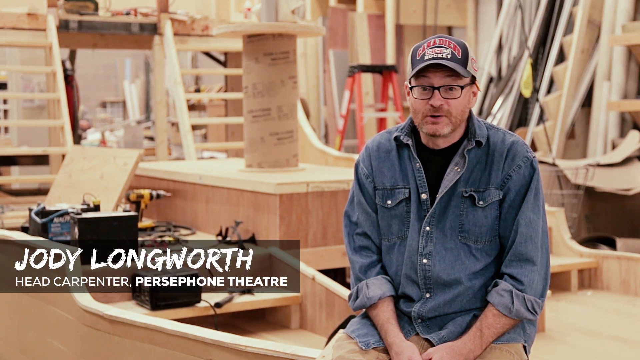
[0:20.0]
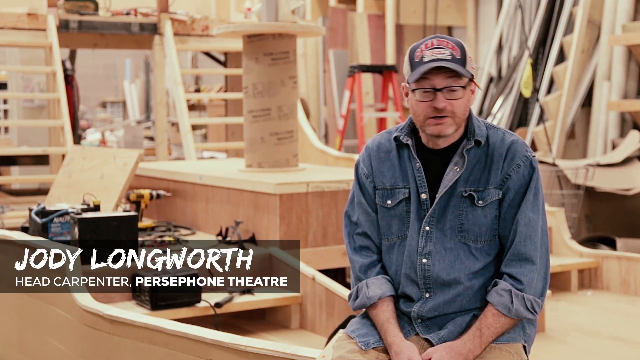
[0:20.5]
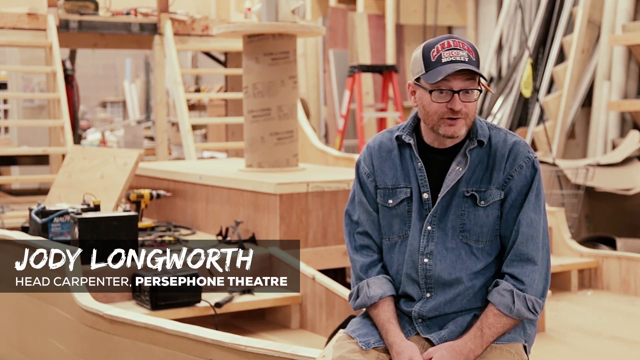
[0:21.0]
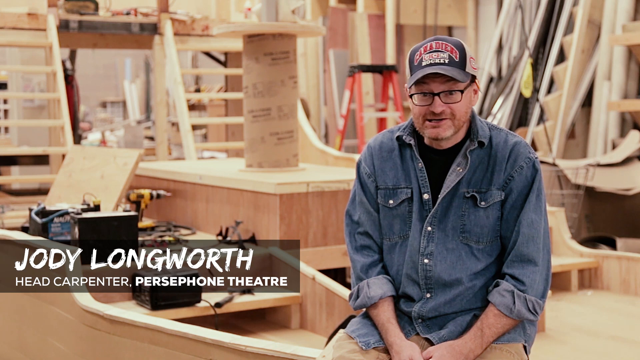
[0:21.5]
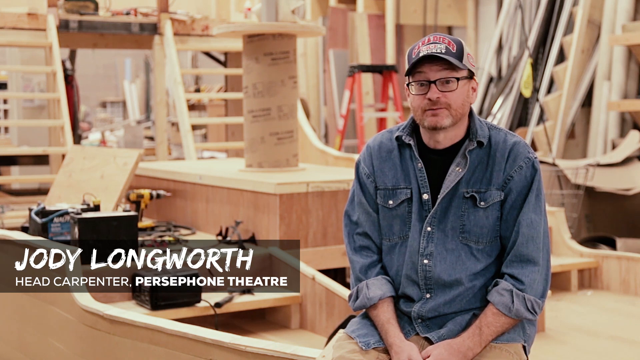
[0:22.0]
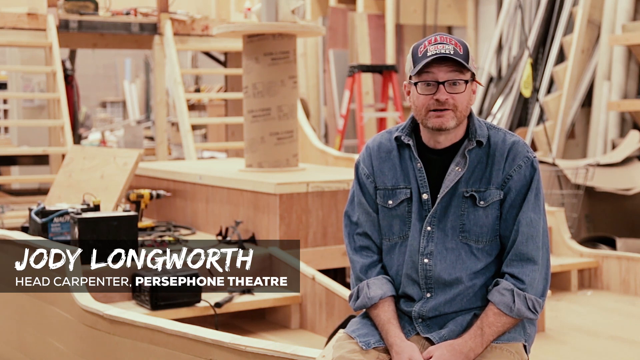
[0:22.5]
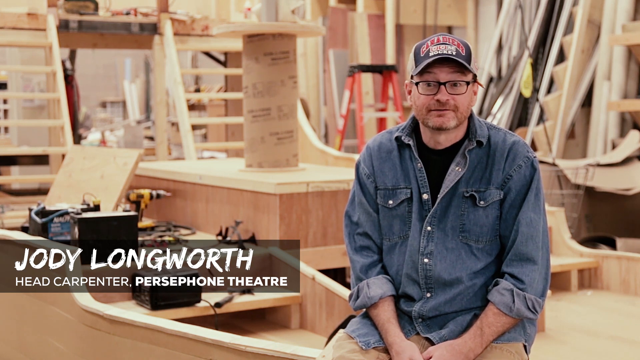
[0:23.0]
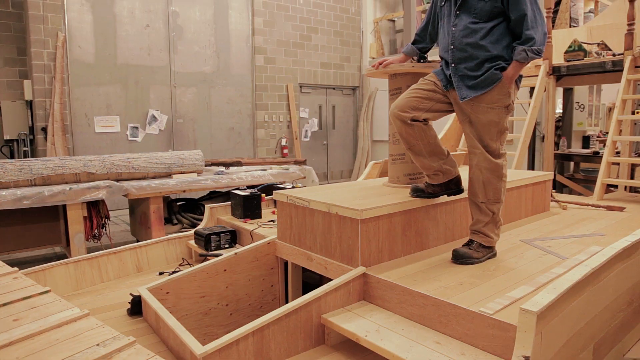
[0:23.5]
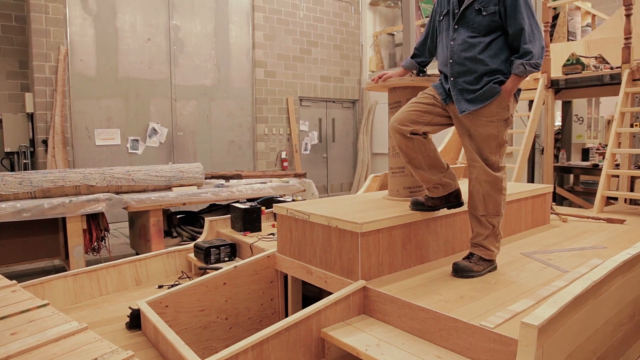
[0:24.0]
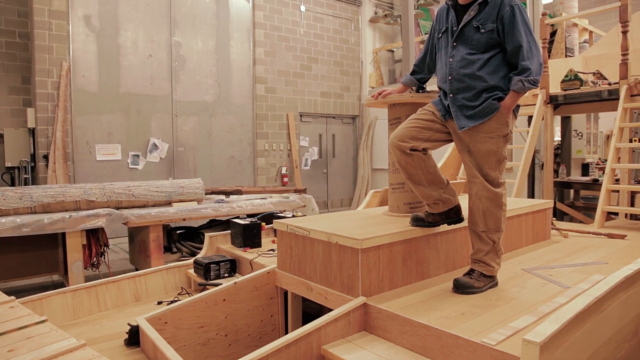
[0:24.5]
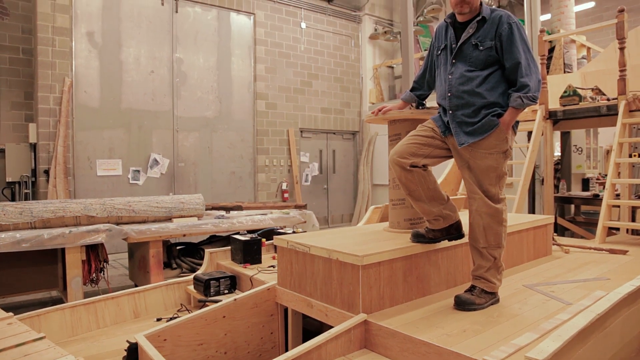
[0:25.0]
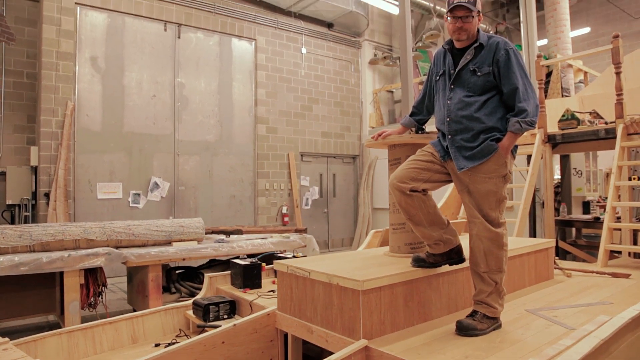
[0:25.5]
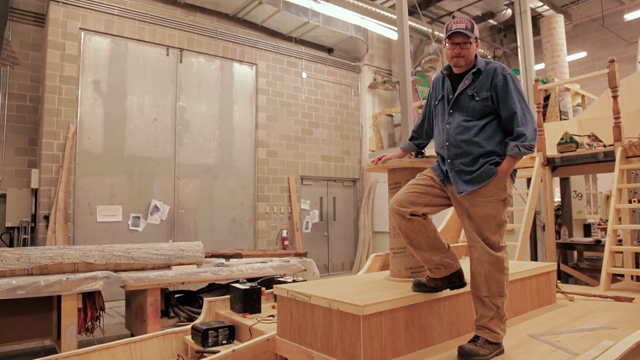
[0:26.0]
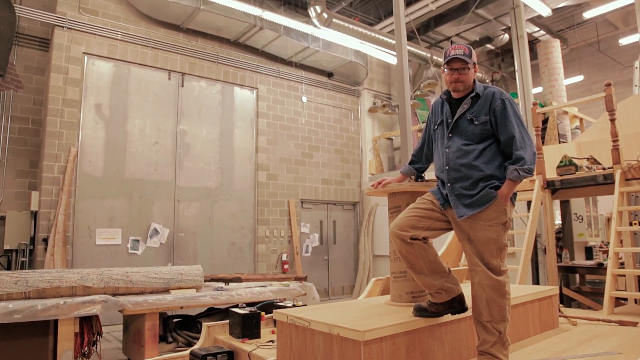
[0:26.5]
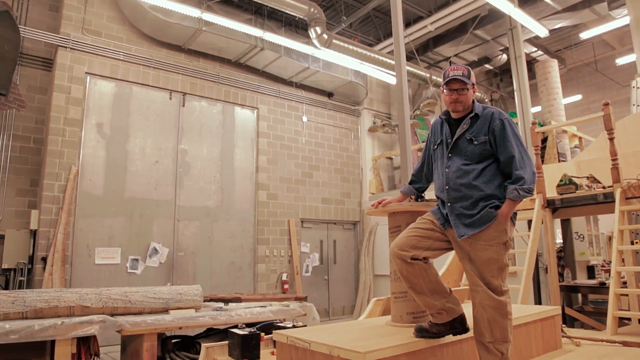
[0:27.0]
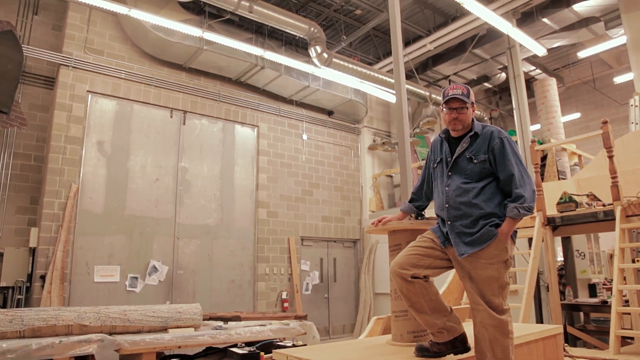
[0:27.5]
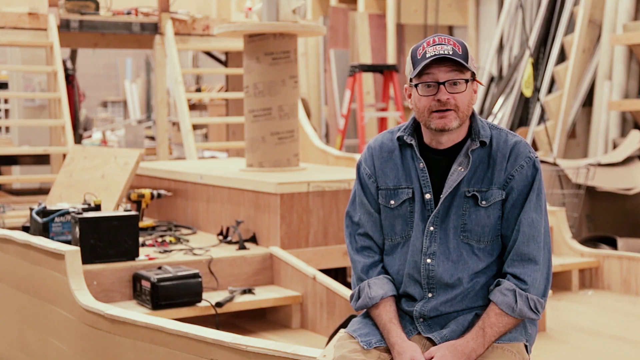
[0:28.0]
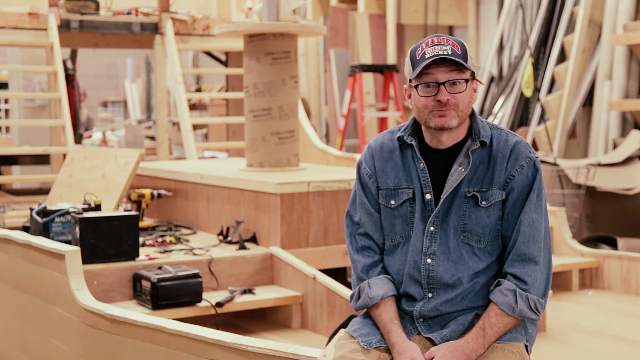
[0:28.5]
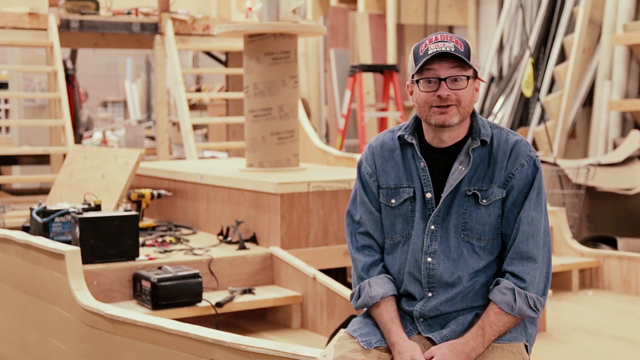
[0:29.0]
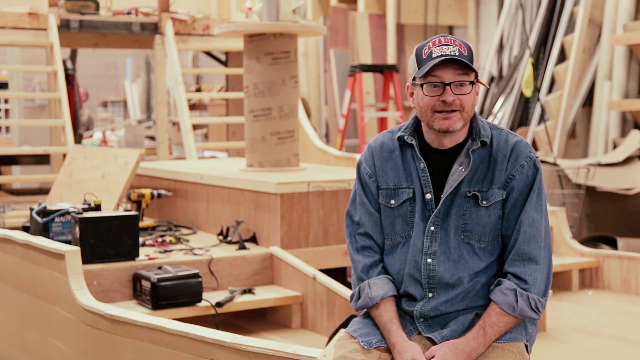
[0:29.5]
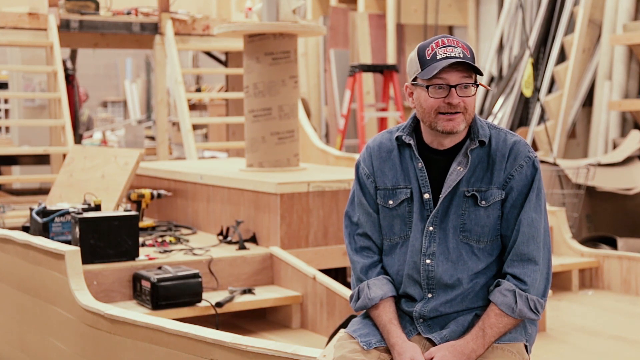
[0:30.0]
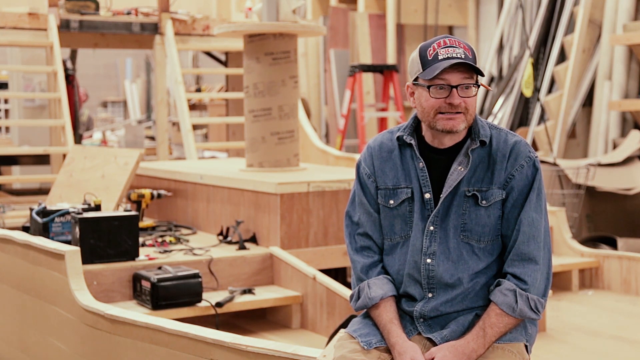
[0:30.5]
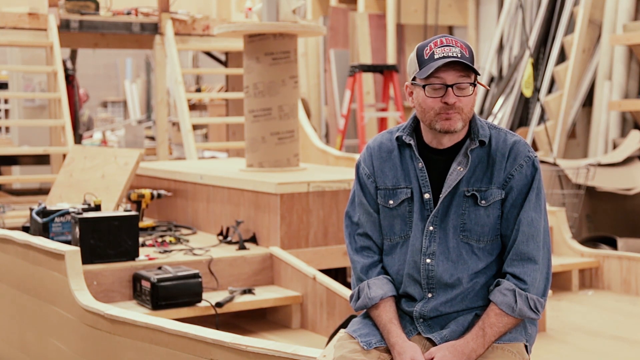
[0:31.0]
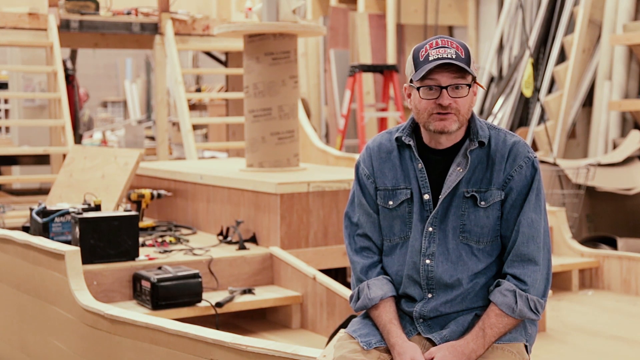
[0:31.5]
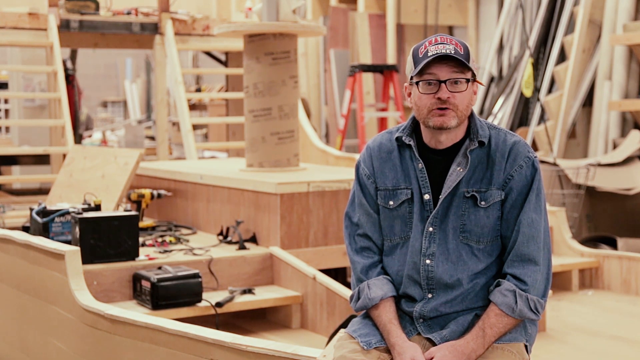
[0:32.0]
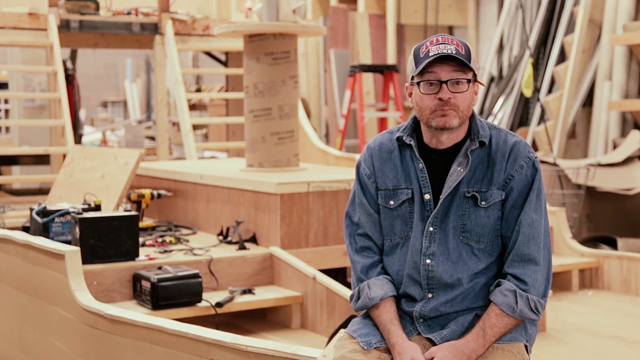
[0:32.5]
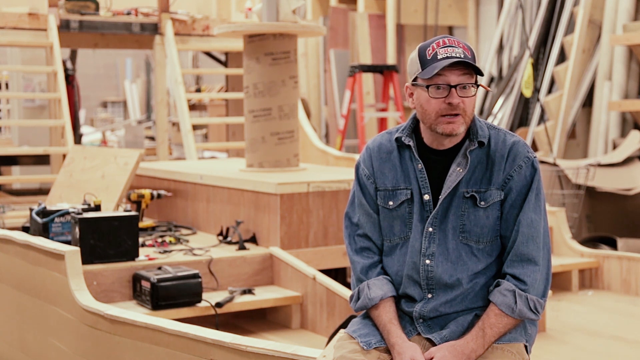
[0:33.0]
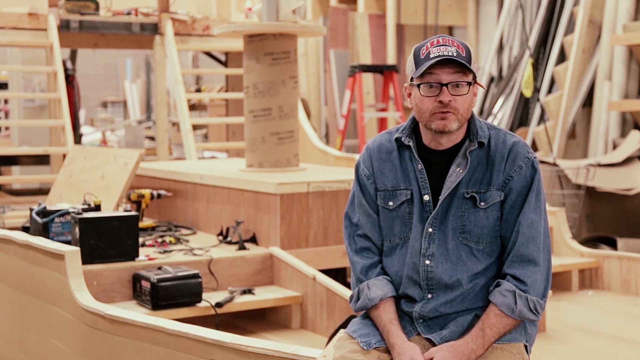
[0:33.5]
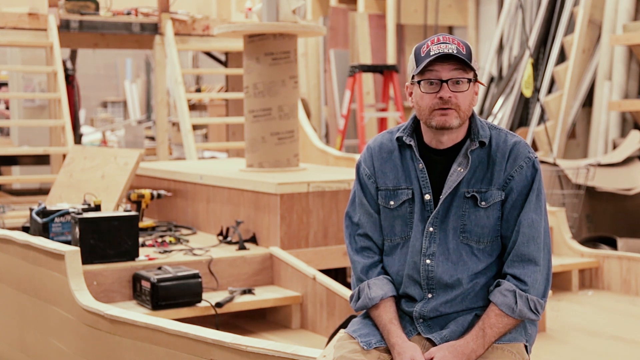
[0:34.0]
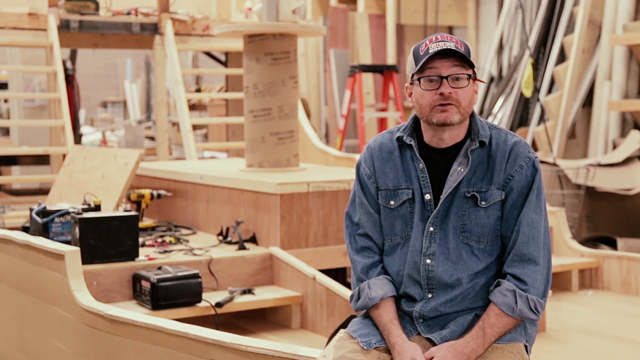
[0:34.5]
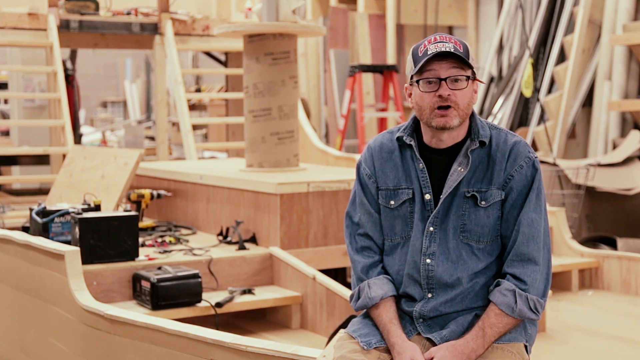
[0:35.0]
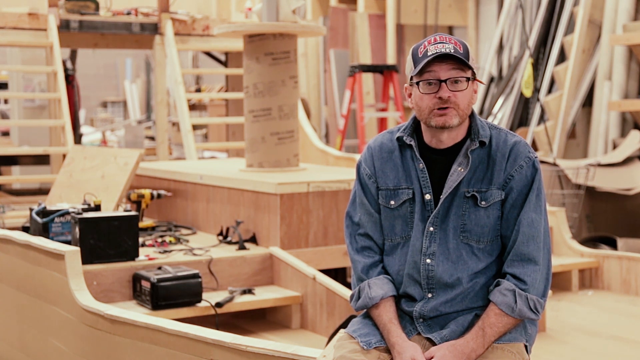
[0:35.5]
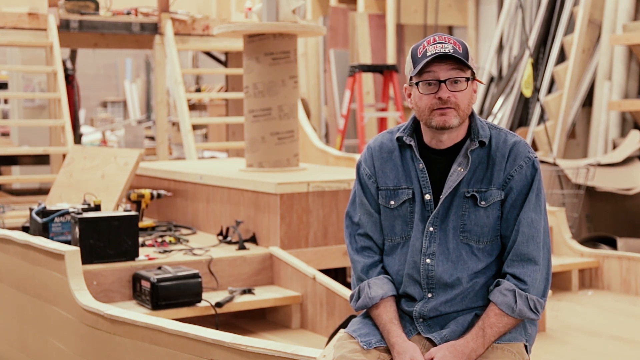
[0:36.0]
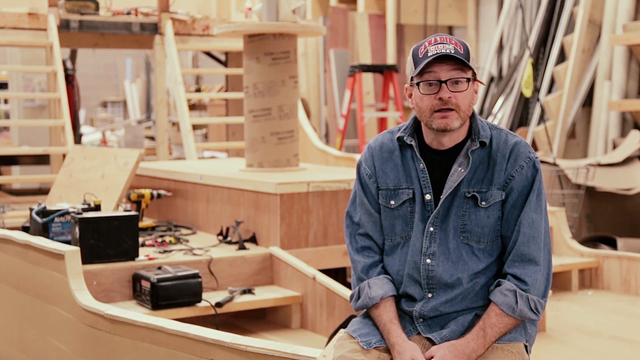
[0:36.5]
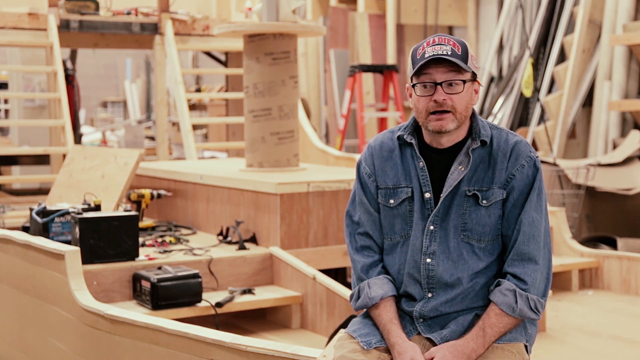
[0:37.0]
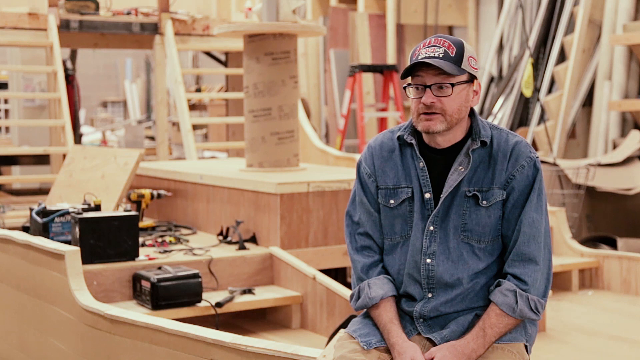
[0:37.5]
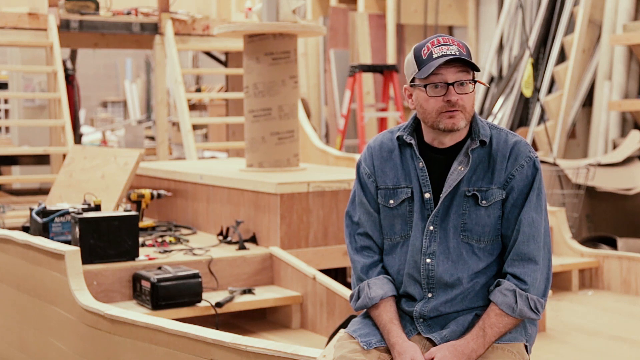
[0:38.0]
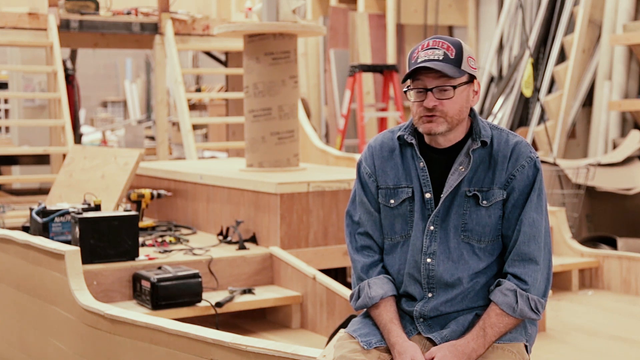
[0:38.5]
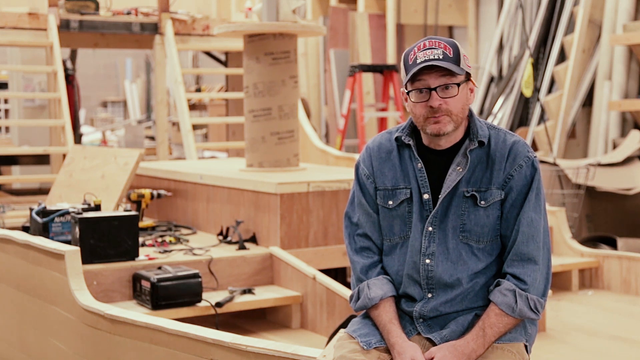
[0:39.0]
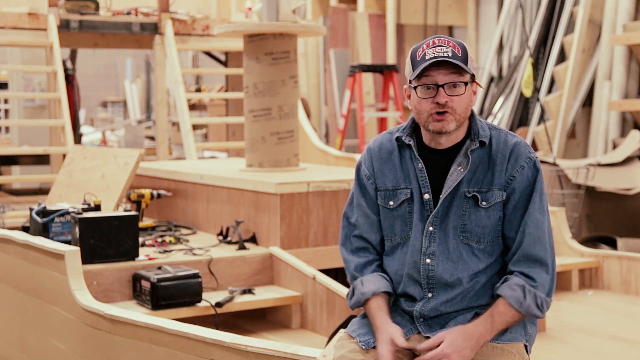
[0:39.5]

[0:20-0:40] Text appears on the screen, including a name beginning "Jody". A young white man wearing a denim jacket, with sunglasses in the back, is talking; he seems to be doing an interview or being interviewed, and it looks like he is demonstrating something. The man is also seen standing on top of the cupboard that he has made.